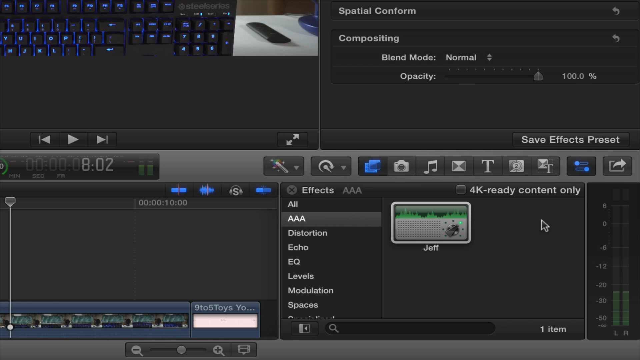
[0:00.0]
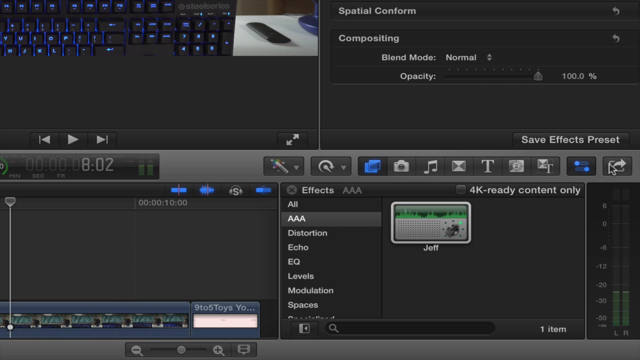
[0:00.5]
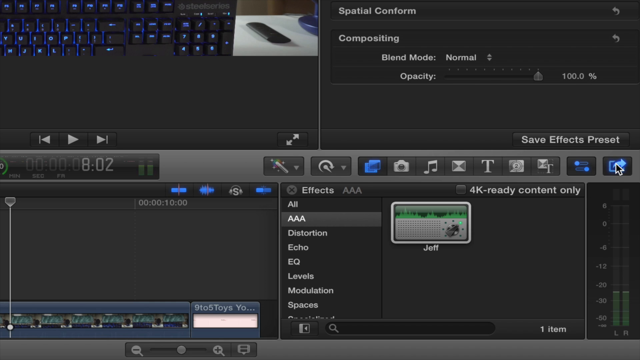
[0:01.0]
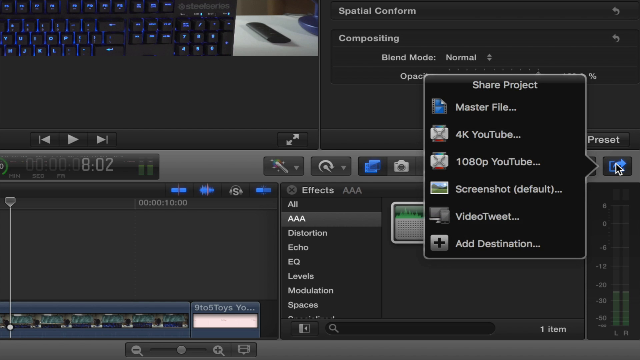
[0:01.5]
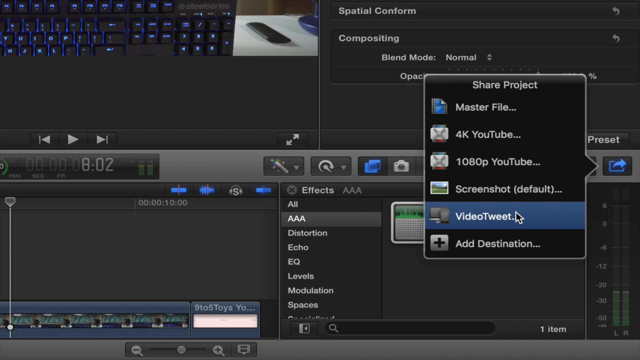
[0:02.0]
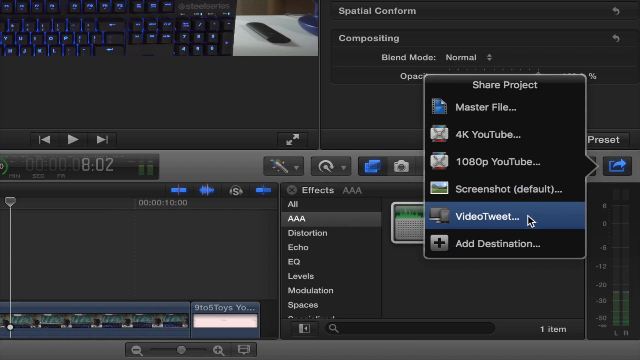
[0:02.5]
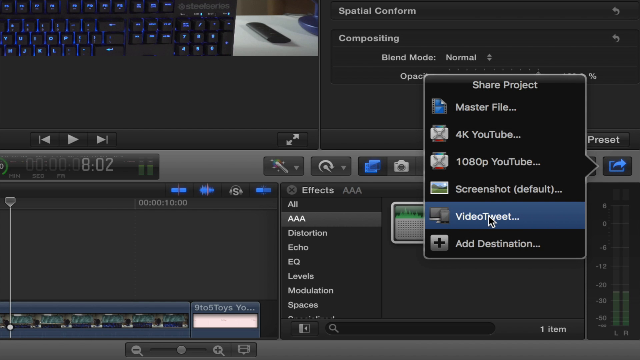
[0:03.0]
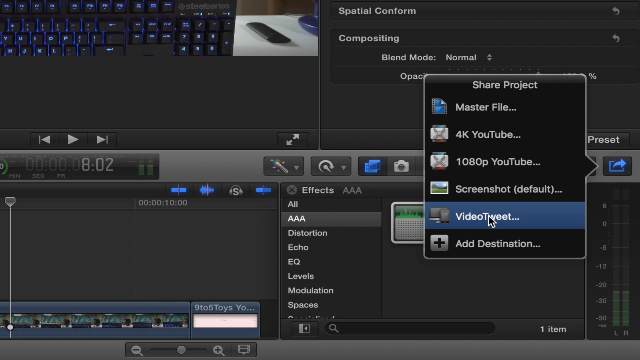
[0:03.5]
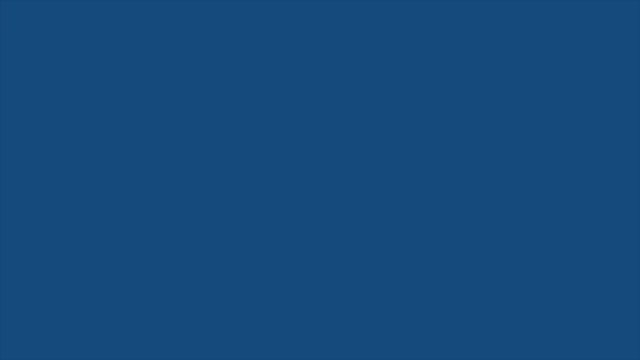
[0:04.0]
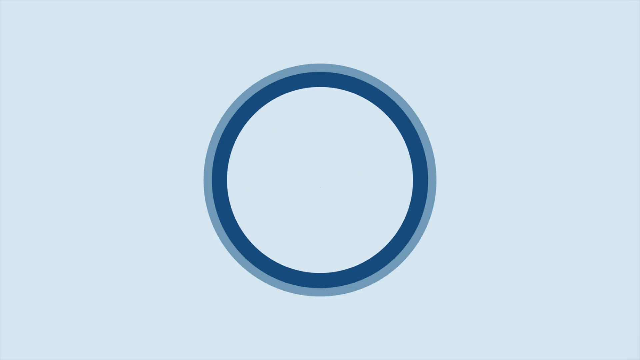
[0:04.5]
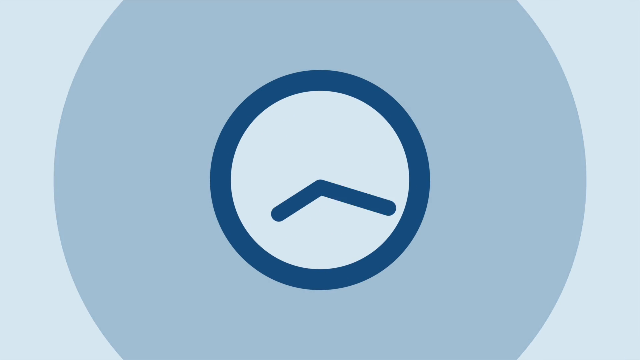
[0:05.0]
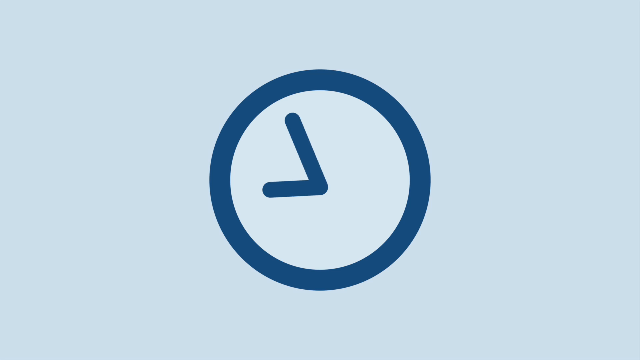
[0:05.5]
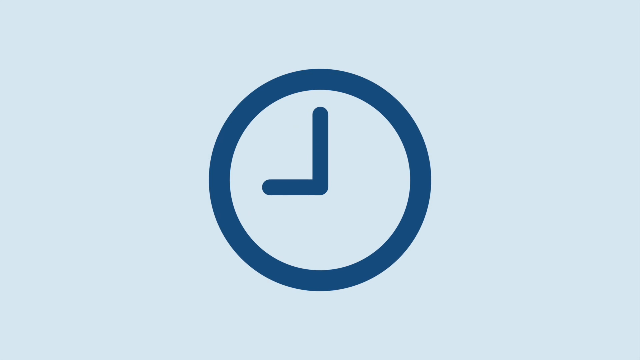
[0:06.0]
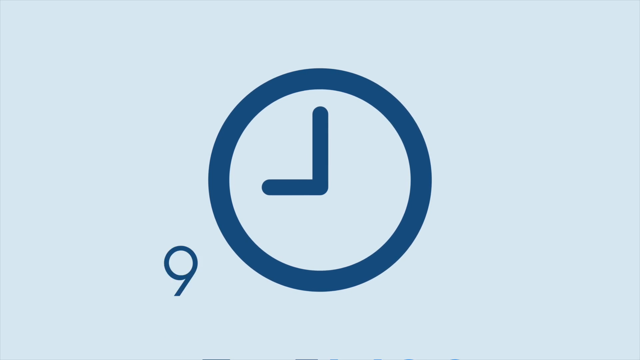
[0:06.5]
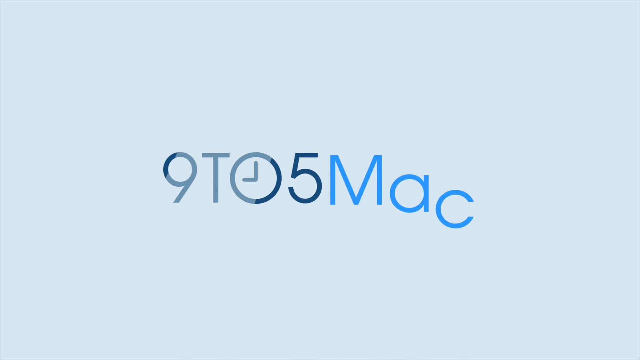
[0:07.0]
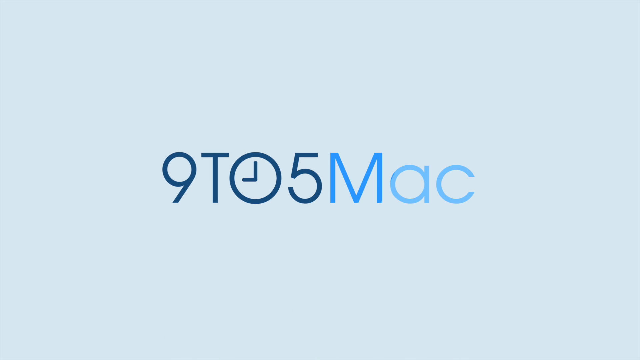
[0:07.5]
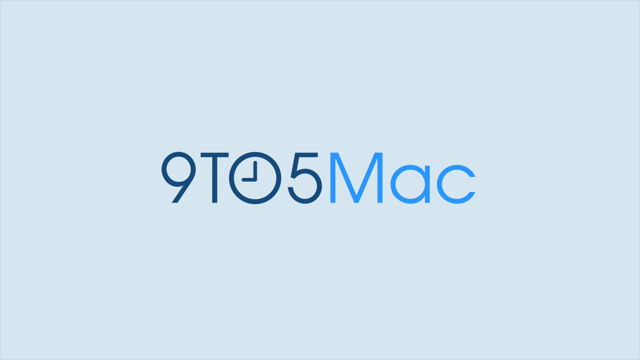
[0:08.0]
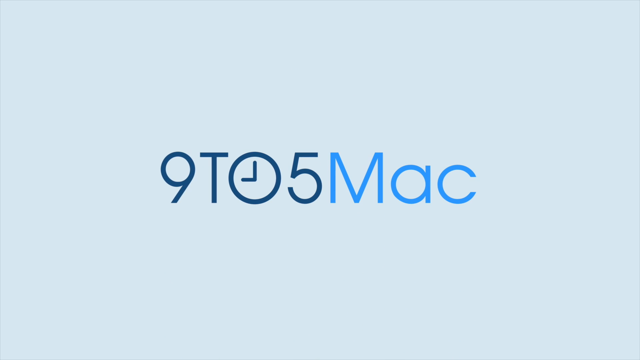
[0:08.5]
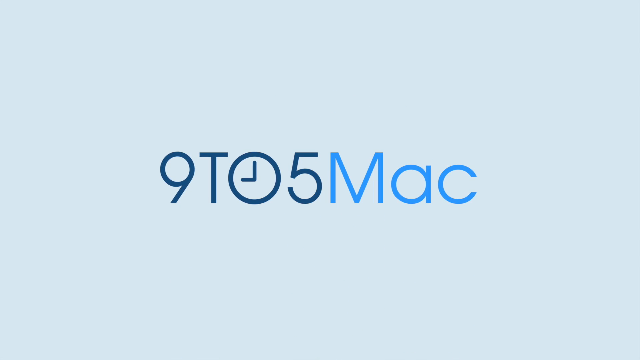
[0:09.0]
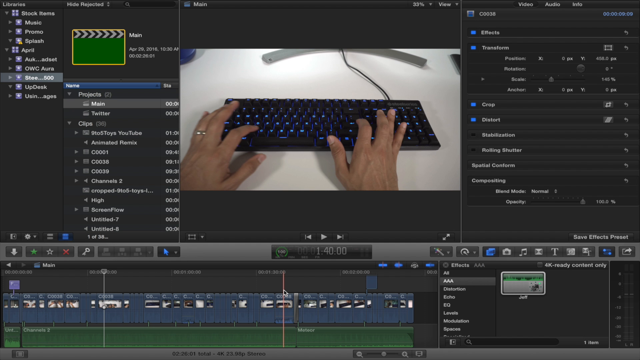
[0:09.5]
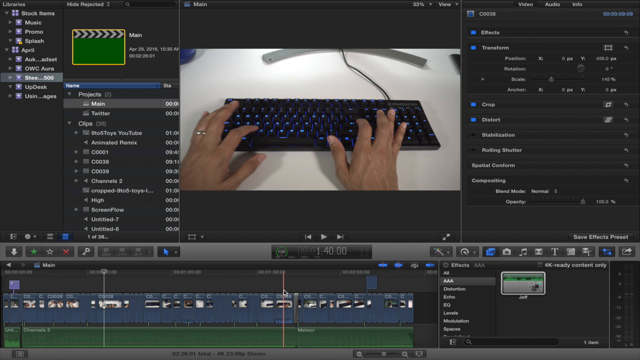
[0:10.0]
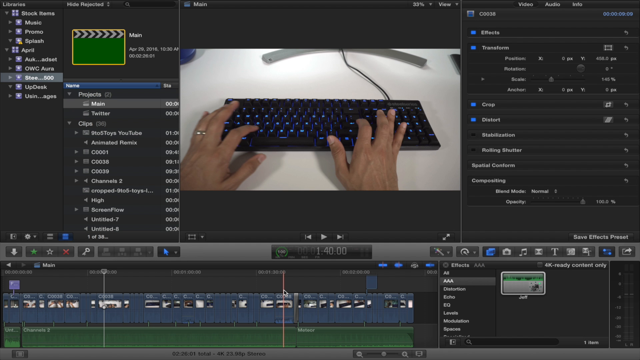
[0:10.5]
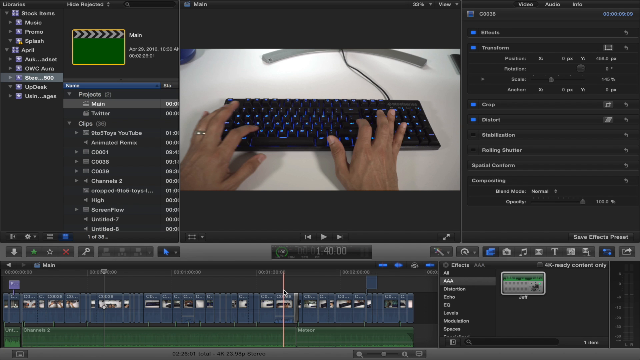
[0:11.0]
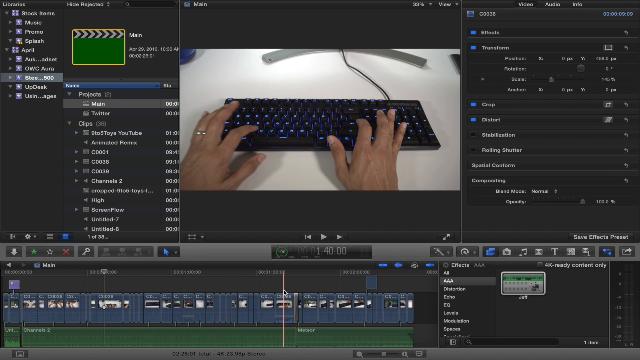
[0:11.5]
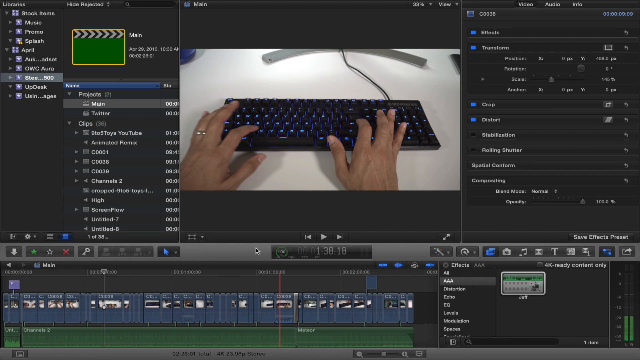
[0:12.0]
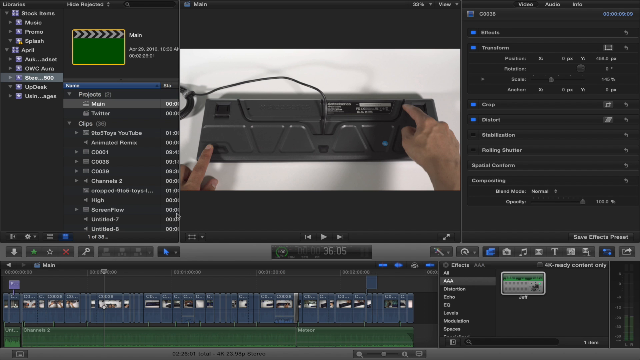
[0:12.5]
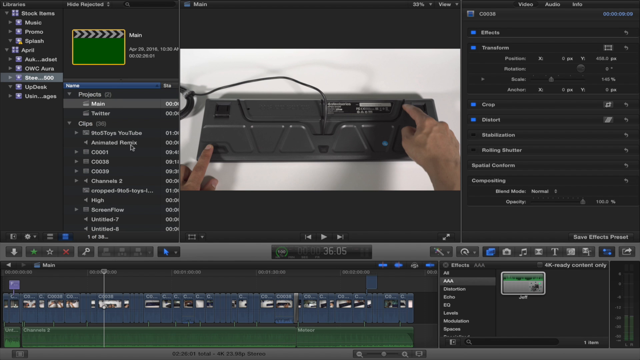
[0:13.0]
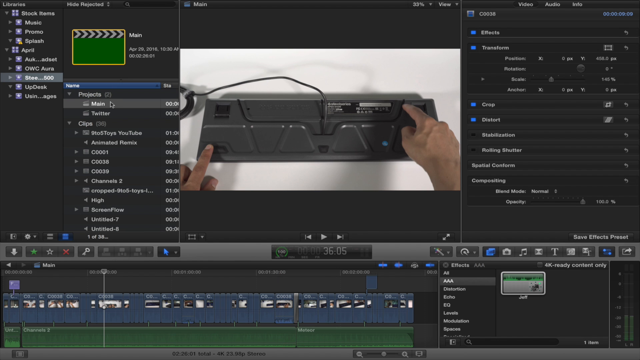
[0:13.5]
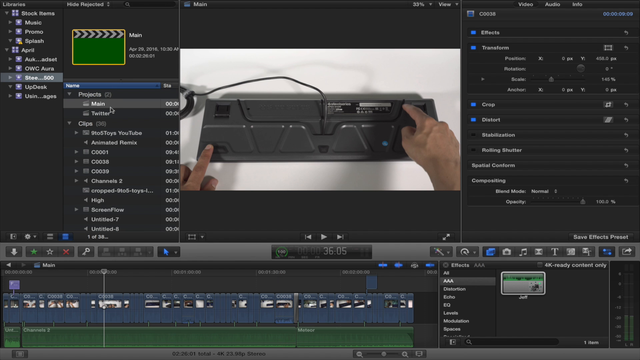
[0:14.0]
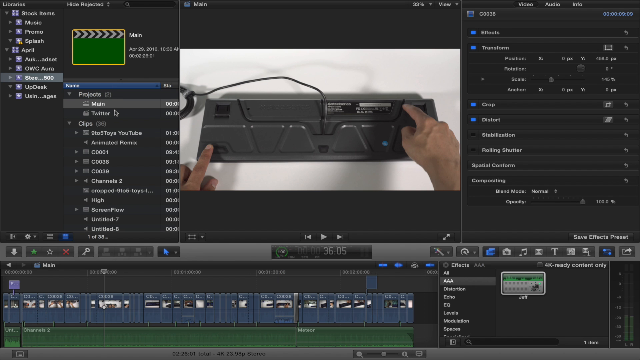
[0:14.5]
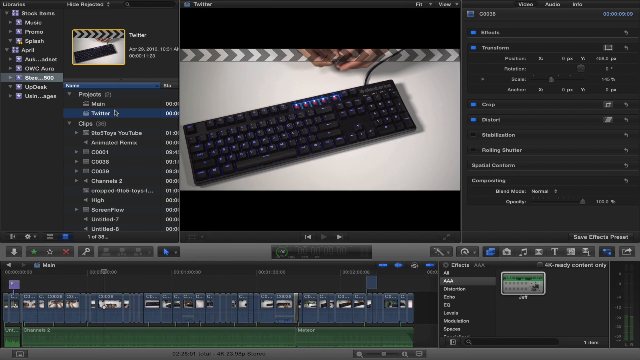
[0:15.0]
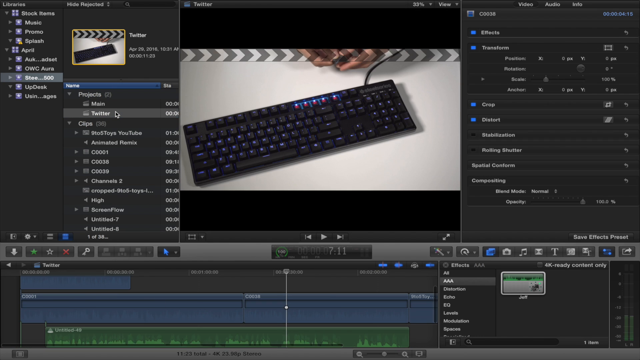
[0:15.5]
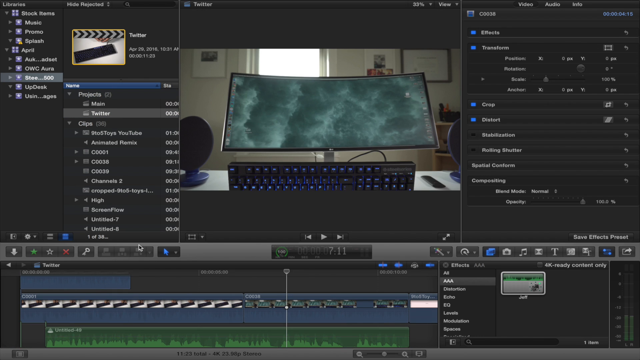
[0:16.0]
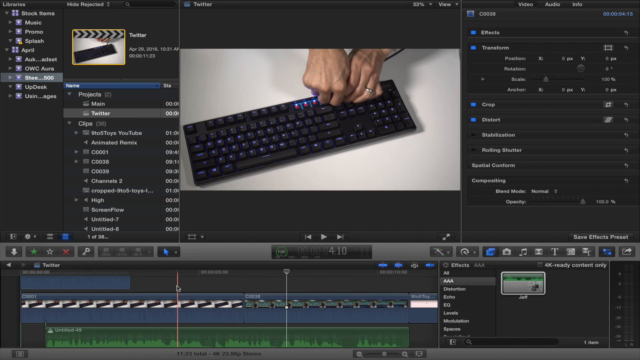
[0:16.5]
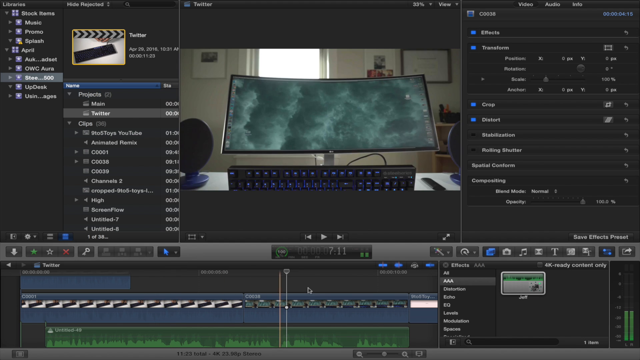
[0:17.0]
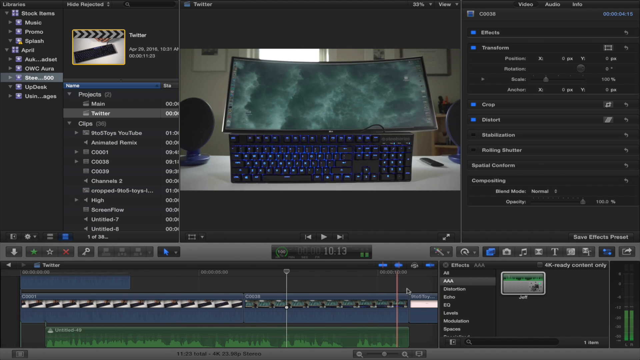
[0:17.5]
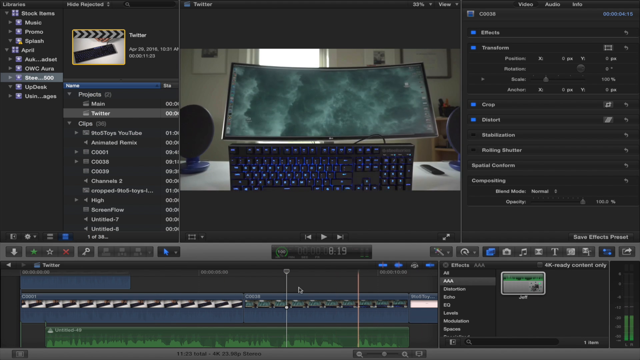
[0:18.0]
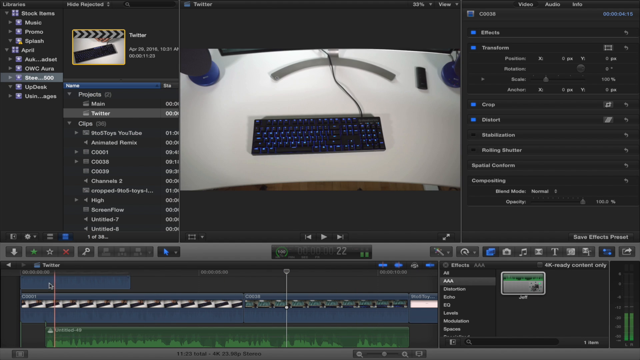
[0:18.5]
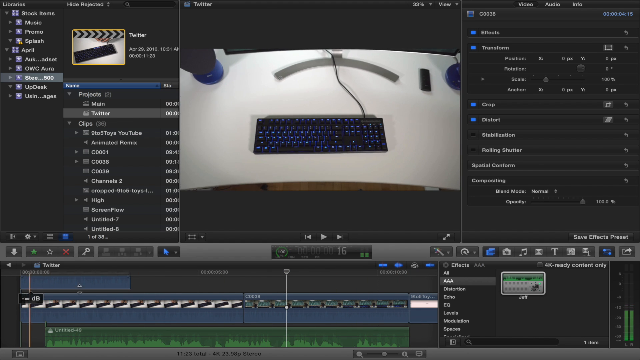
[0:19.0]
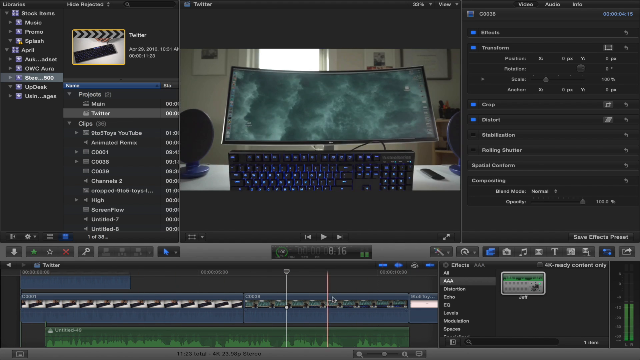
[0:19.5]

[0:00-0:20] The video opens on what appears to be a computer display filling the screen, showing what appears to be a program running on a computer, broken up into segments and predominantly grey and black. A prominent horizontal control panel runs across the middle of the screen with options for what appears to be photograph, music, text and other editing controls. In the top left there seems to be a photograph of a keyboard. In the top right is a section titled "Spatial Conform" with compositing options underneath. In the bottom left appears to be a timeline for a video, shown as a horizontal bar along the bottom, and on the right appears to be a video effects menu. The very far right option in the middle horizontal control bar is selected, under the title "Share Project". The options that appear under it are "Master File", "4K YouTube", "1080p YouTube", "Screenshot", "(default)", "Video Tweet" and "Add Destination". Video Tweet is selected, and suddenly a blue screen fills the view before a white circle forms from the outside in and another white circle forms from the middle of the screen outward, creating a blue ring. The ring pulses, creating an outer lighter blue ring that goes out to fill the screen with lighter blue. Clock hands appear in the middle of the white circle and spin round at great speed until they reach 9 o'clock. The logo shrinks as other letters rise up from the bottom of the screen to form an animated title reading "9TO5Mac", with the clock as the O. The video cuts back to the video editing control screen, where the video display field in the top middle shows horizontal video of a black keyboard and a person's hand at the keyboard. The cursor is on the bottom bar, the video timeline, and as it moves it moves the video above to a later point where the hands are pressed down on the underneath of the keyboard. The cursor moves up to the top left media folder menu and moves down from "Main" to click the option "Twitter". The video footage on the right changes to just a shot of the keyboard, then a shot of a keyboard with a monitor above it and a window and office behind it, before the cursor moves back down onto the timeline and a shot of hands at the keyboard appears again. The cursor zooms right and then left along the length of the timeline, showing how the video changes.